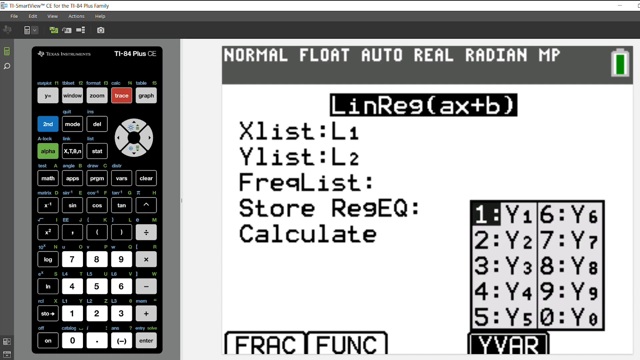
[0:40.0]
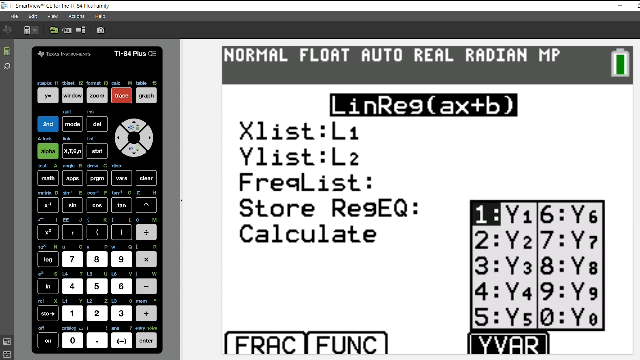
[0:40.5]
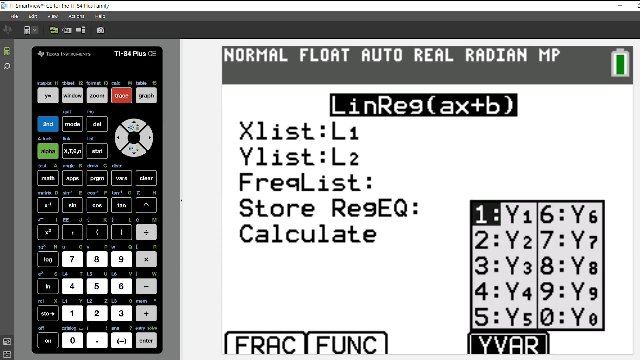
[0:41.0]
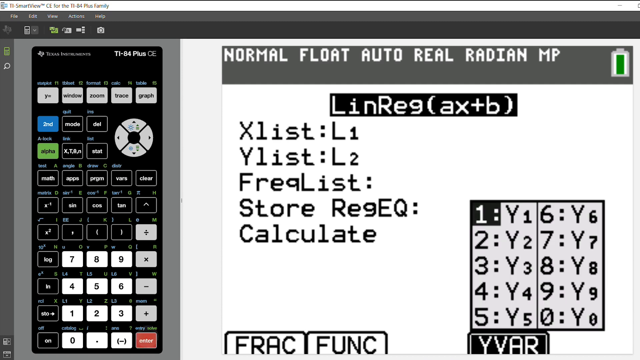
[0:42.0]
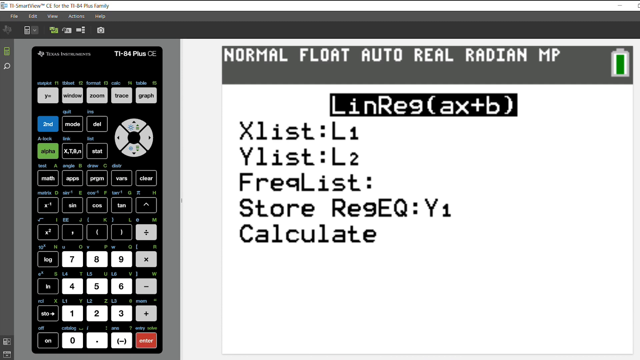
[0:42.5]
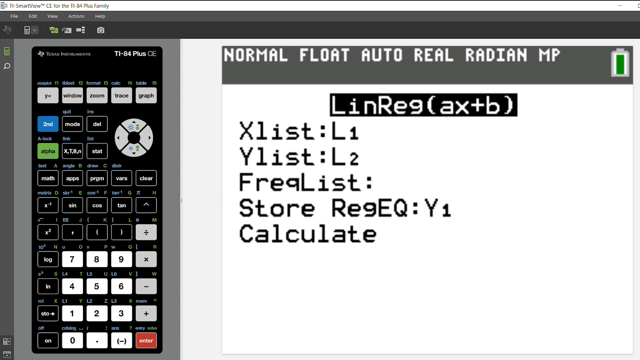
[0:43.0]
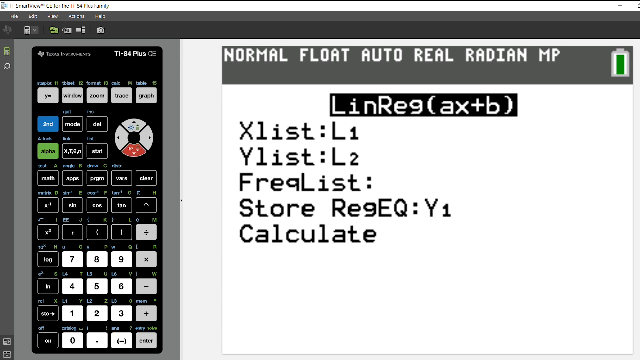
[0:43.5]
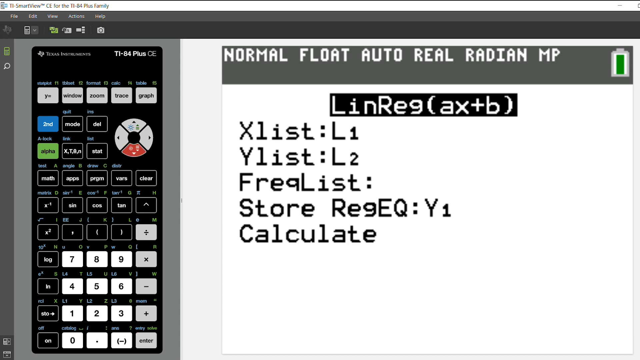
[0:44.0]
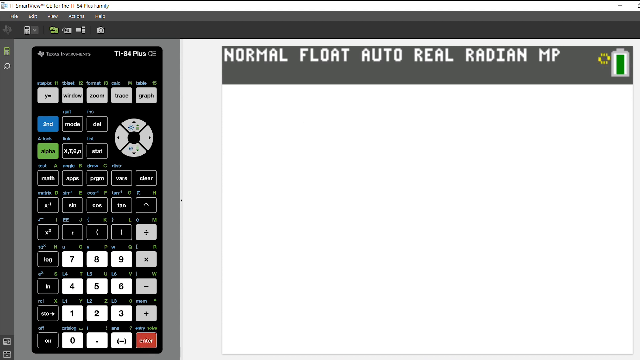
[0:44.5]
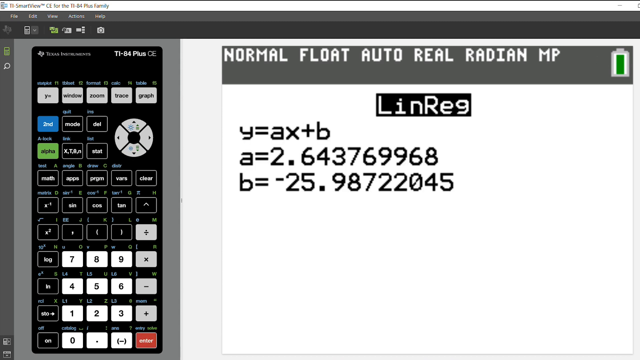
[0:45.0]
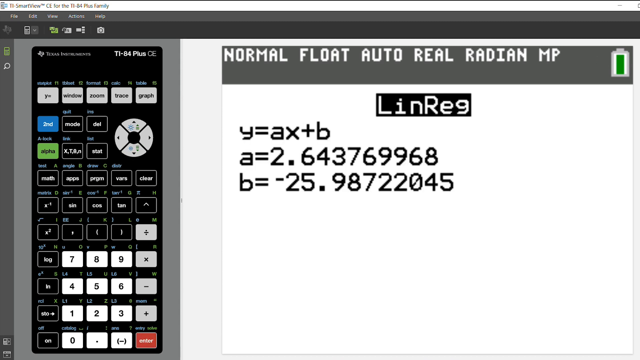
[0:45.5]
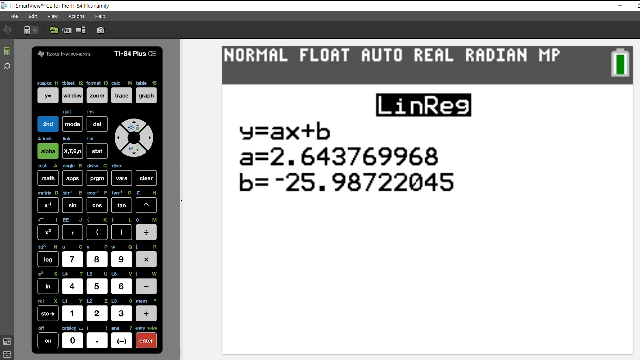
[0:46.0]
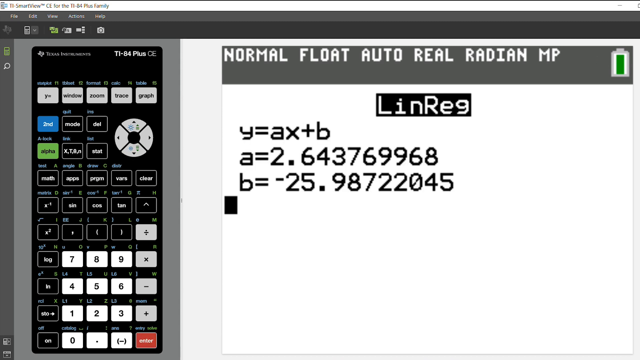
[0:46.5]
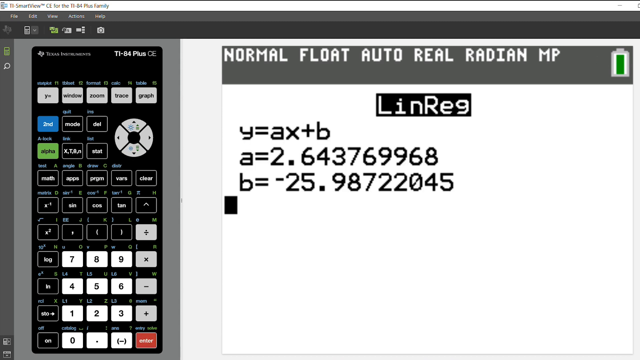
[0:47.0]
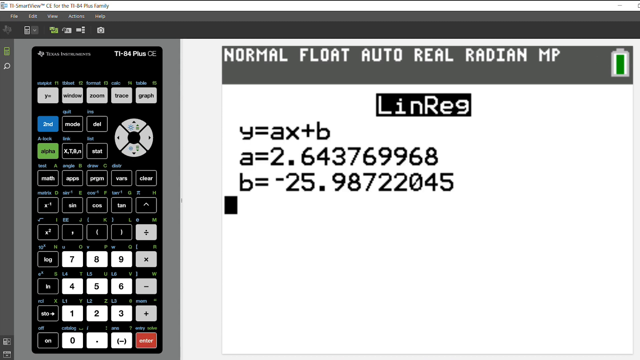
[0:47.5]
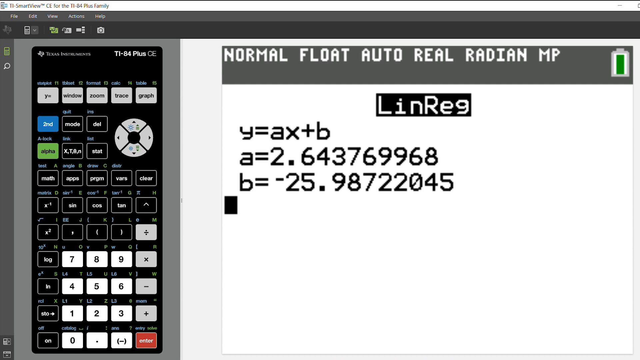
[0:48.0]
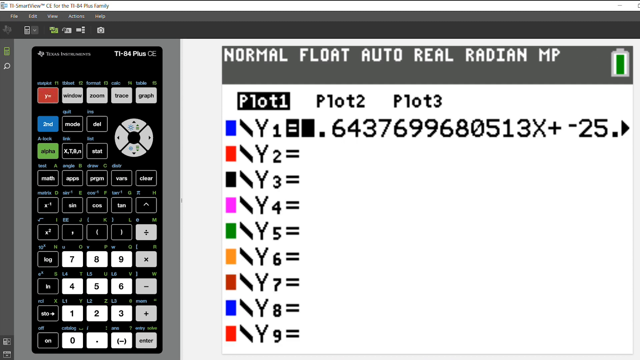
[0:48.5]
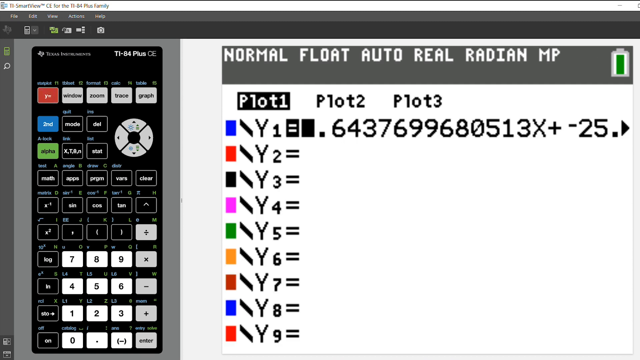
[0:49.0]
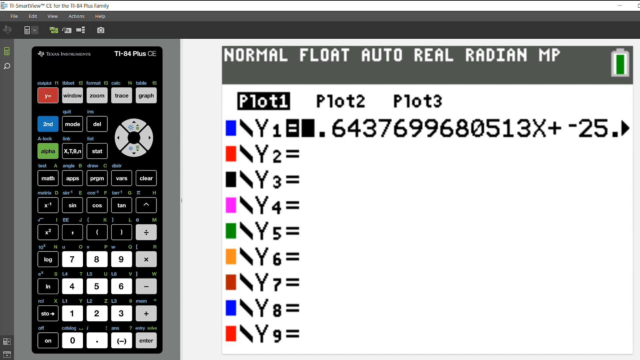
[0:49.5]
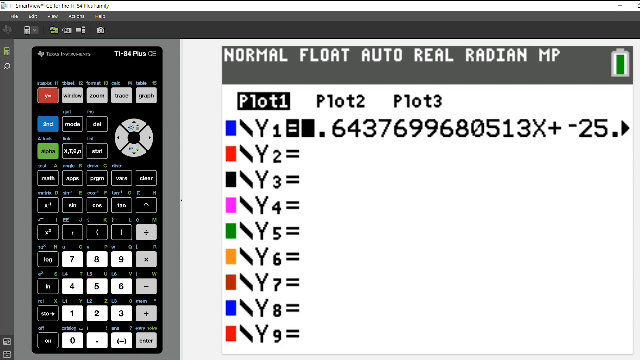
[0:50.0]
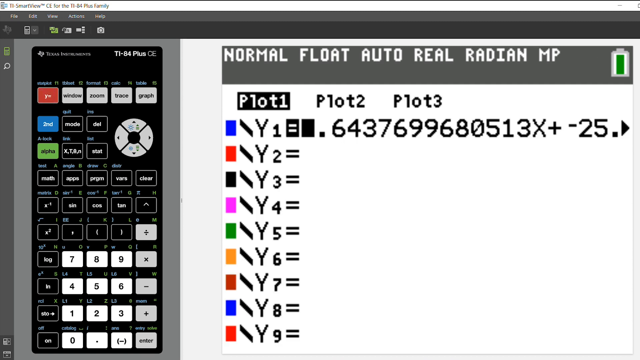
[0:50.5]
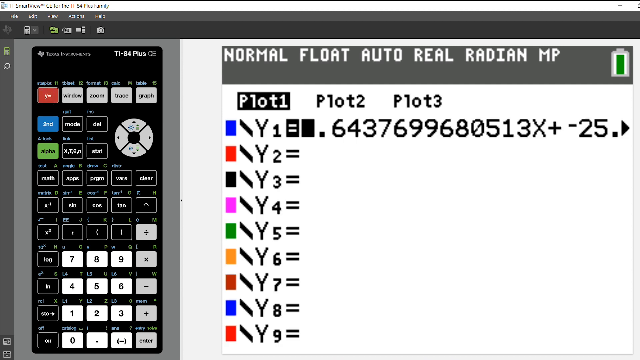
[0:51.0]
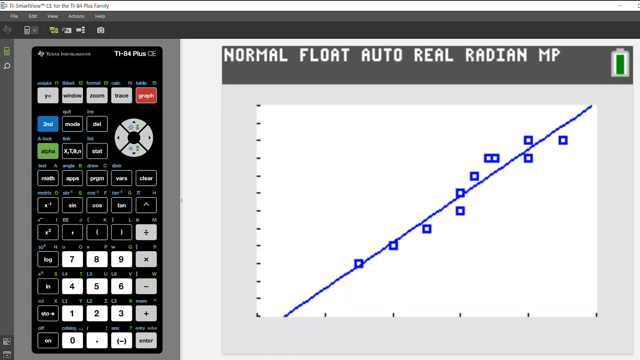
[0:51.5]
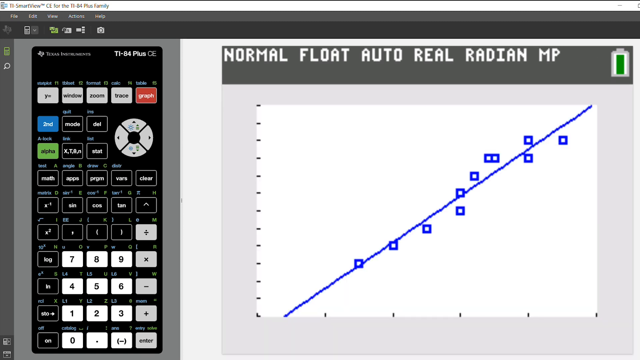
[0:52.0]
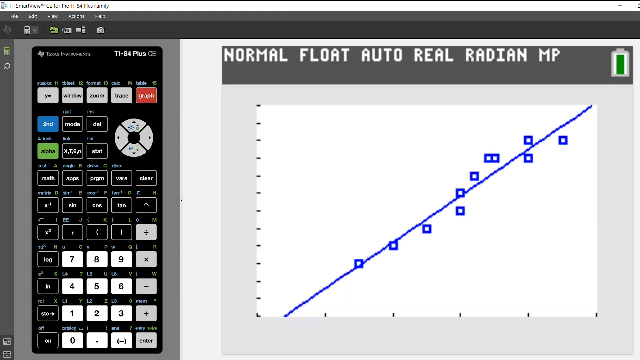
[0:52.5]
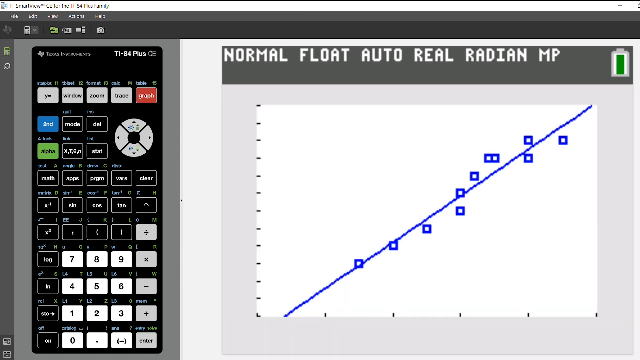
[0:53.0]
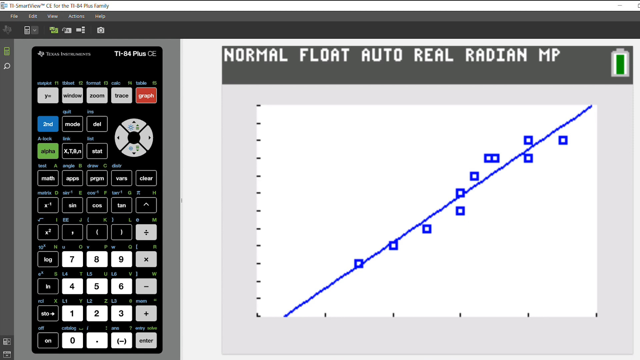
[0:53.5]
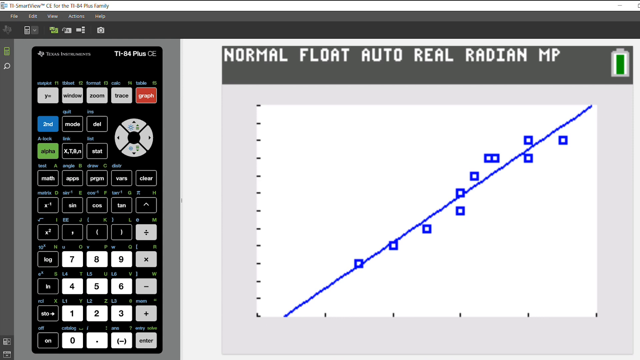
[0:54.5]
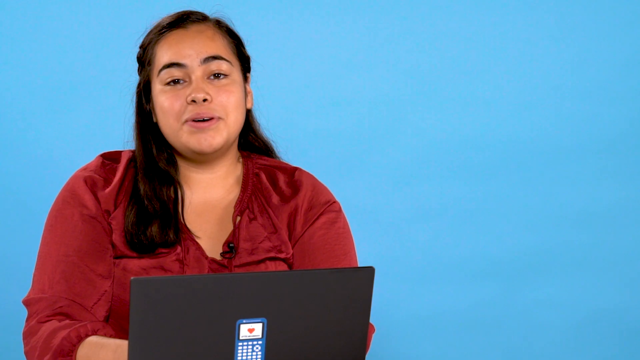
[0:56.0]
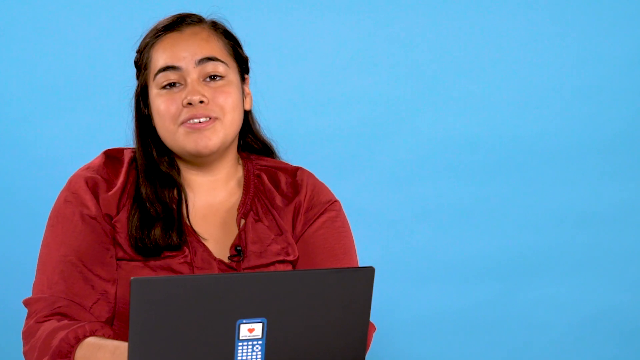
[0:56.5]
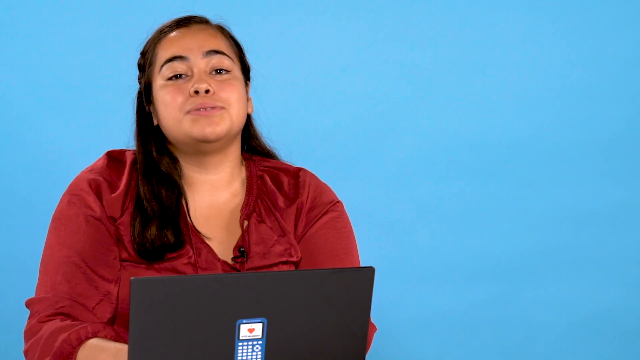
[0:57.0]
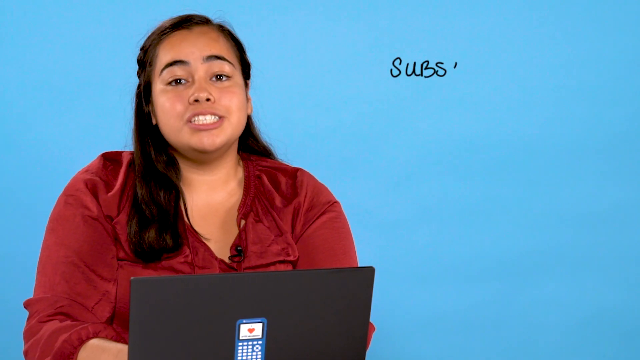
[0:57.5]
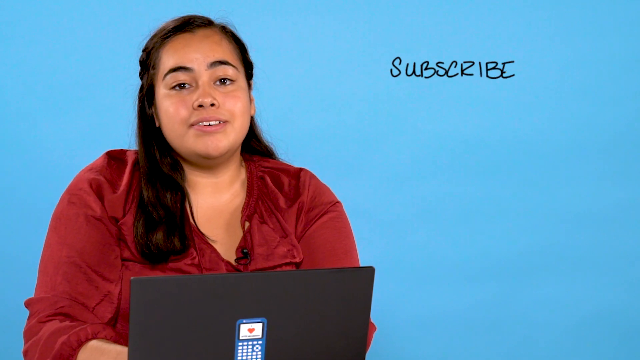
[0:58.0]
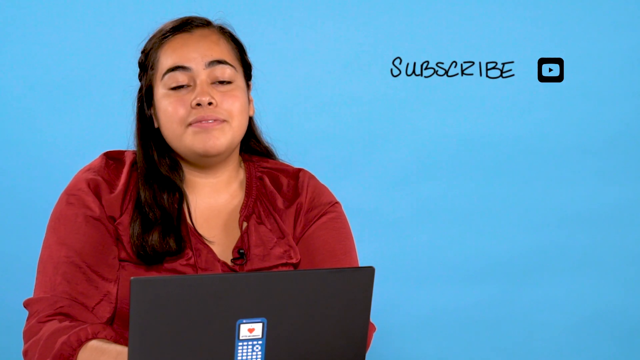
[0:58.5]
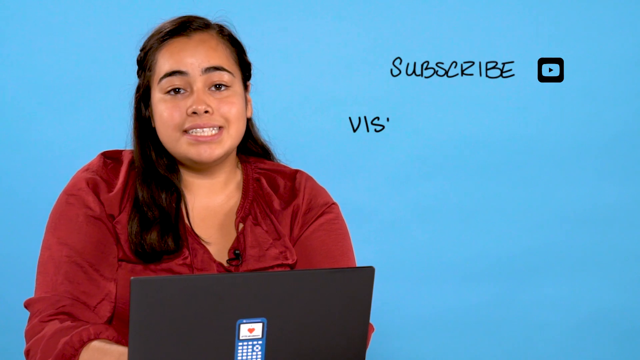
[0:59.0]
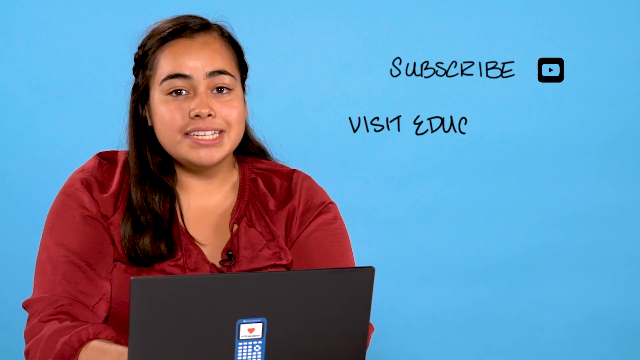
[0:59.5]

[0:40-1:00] The video shows how to break down the formula Y = AX + B by finding A and finding B, with the X list equal to L1 and the Y list equal to L2. After finding the formula, plot 1, plot 2 and plot 3 are found. A straight line is drawn on the graph: it cuts through three of the plots along its way and passes in between the others without touching them, moving next to them.